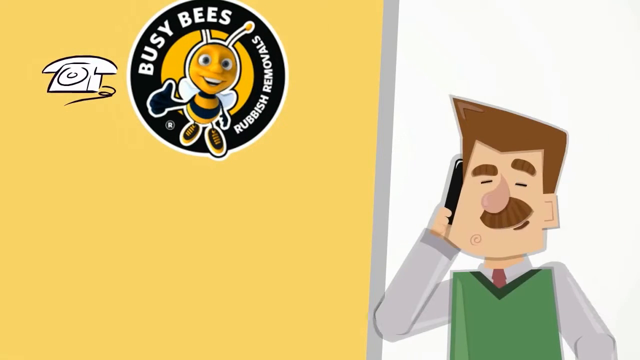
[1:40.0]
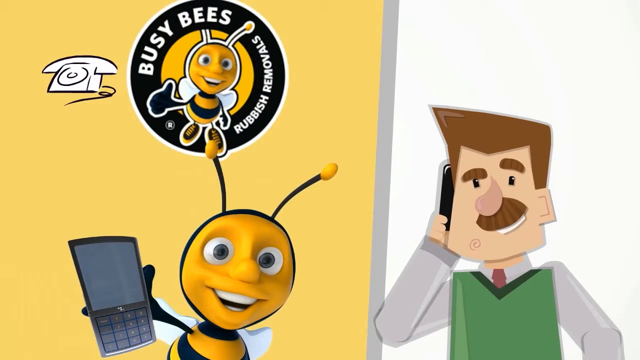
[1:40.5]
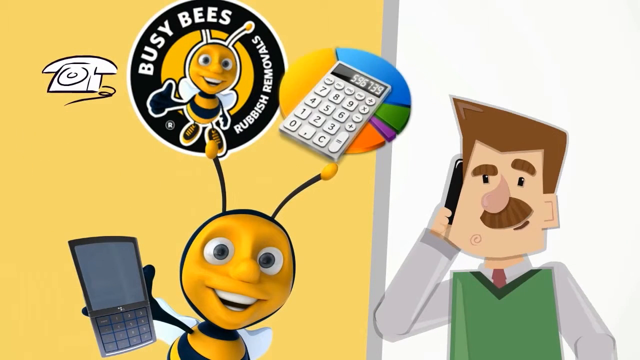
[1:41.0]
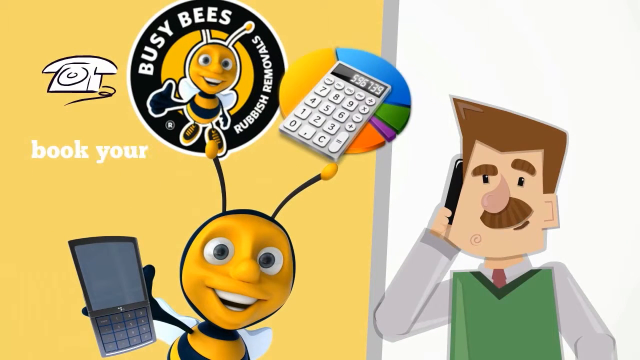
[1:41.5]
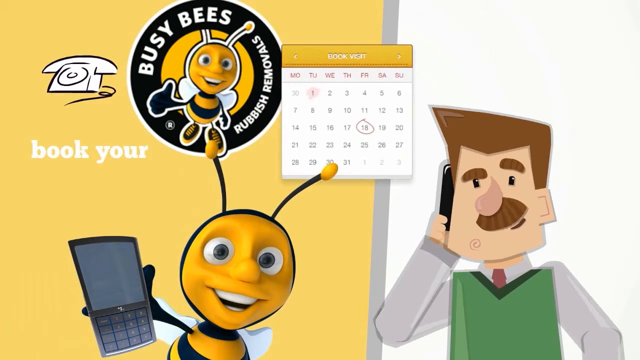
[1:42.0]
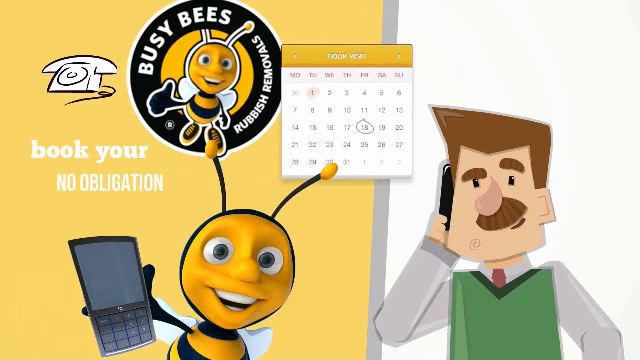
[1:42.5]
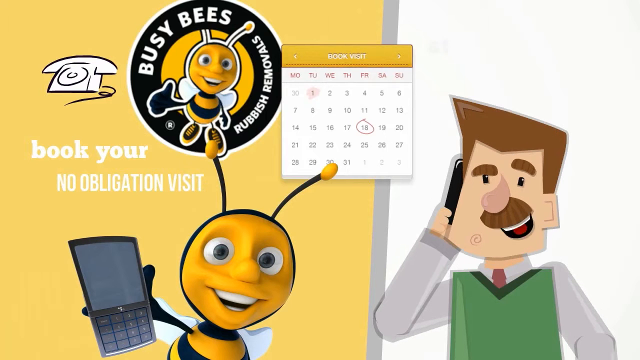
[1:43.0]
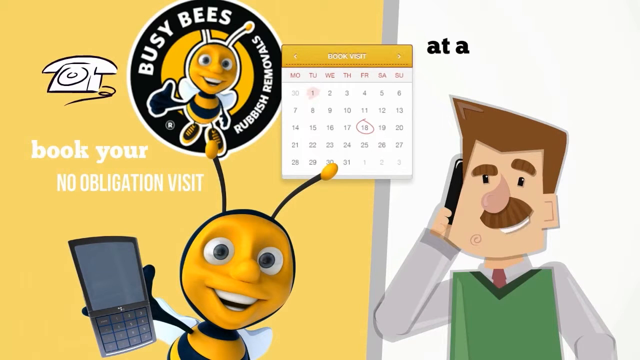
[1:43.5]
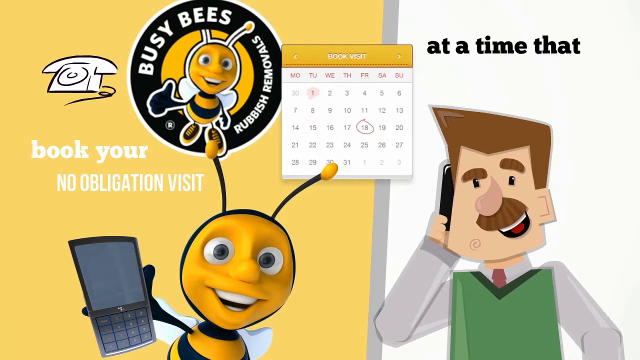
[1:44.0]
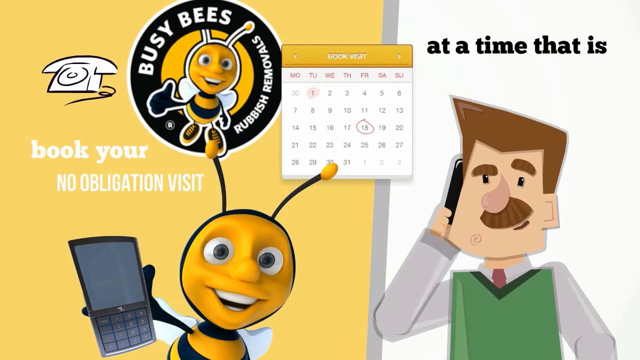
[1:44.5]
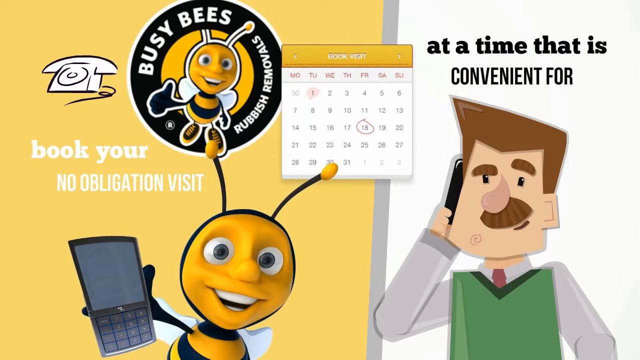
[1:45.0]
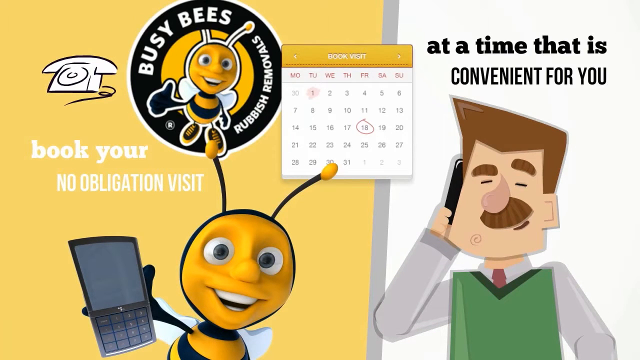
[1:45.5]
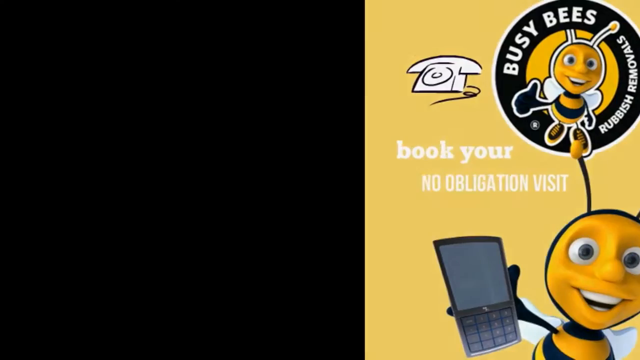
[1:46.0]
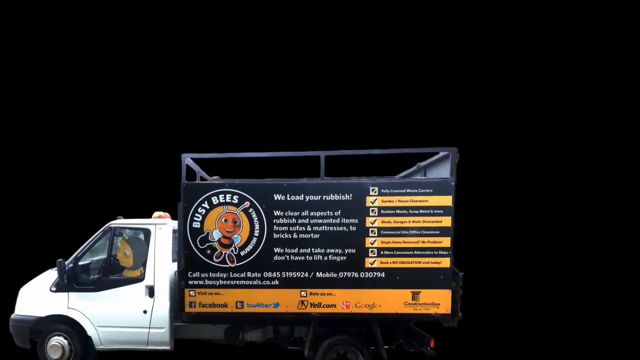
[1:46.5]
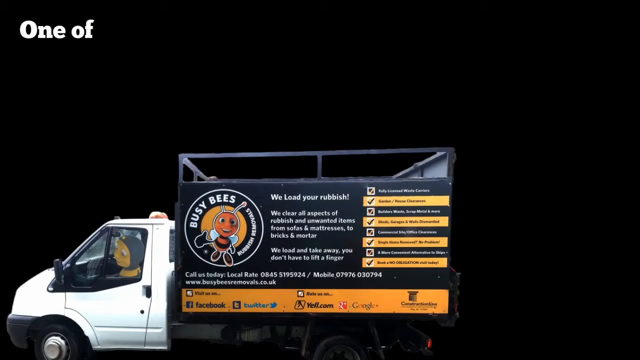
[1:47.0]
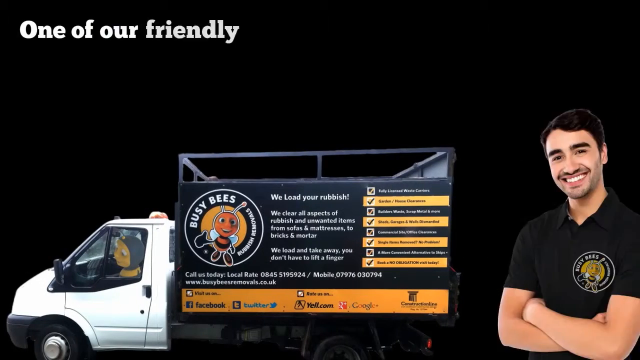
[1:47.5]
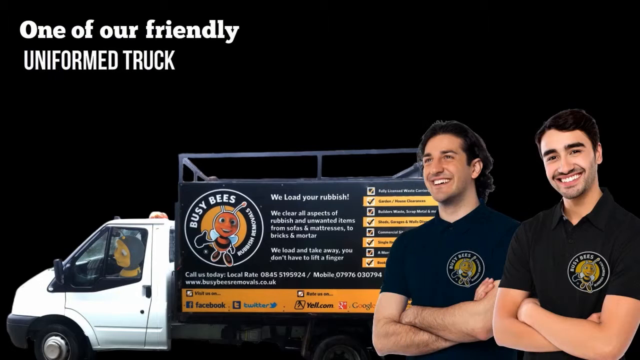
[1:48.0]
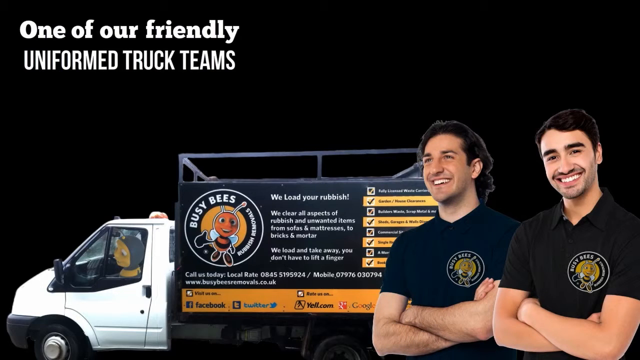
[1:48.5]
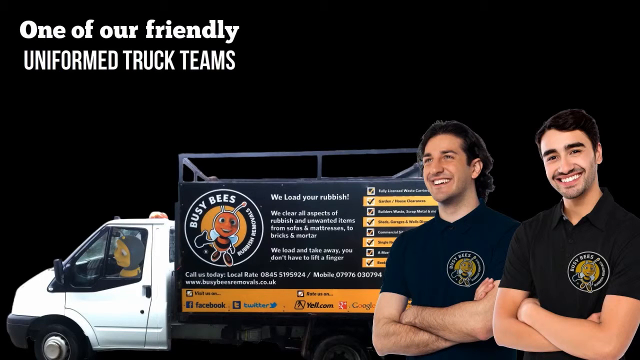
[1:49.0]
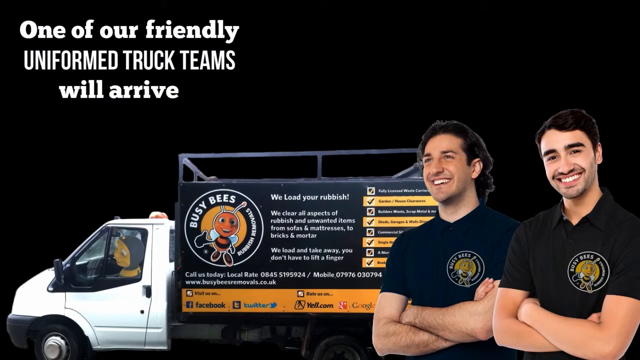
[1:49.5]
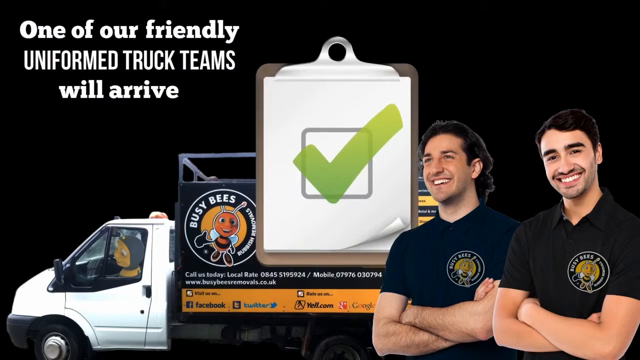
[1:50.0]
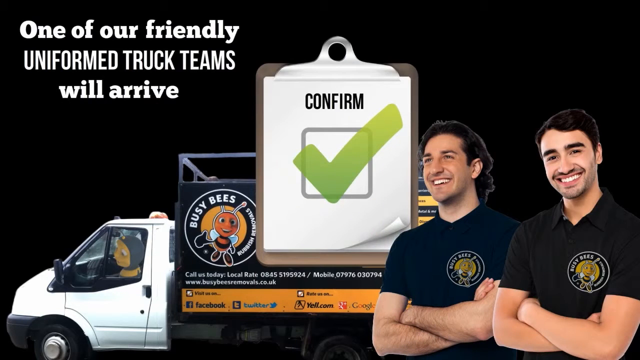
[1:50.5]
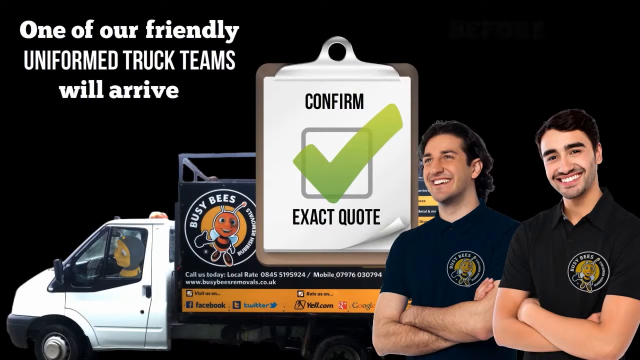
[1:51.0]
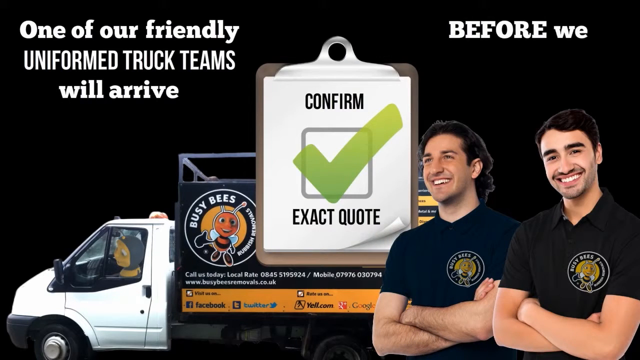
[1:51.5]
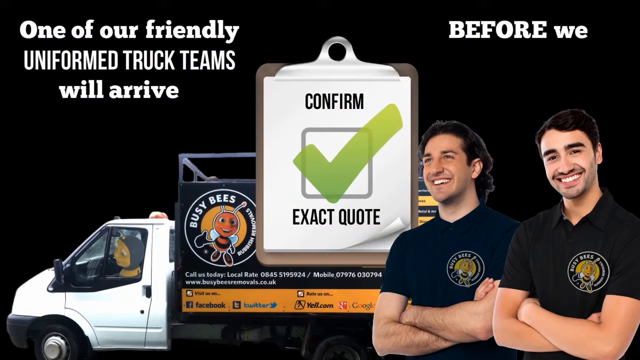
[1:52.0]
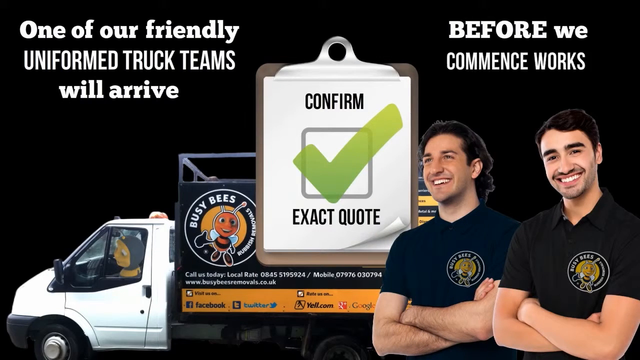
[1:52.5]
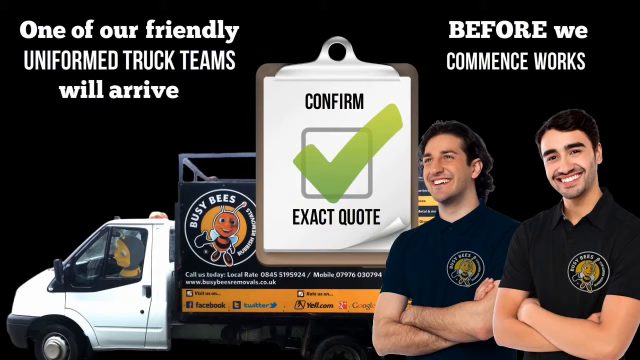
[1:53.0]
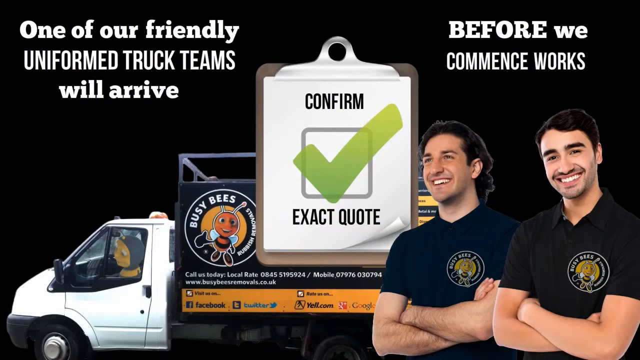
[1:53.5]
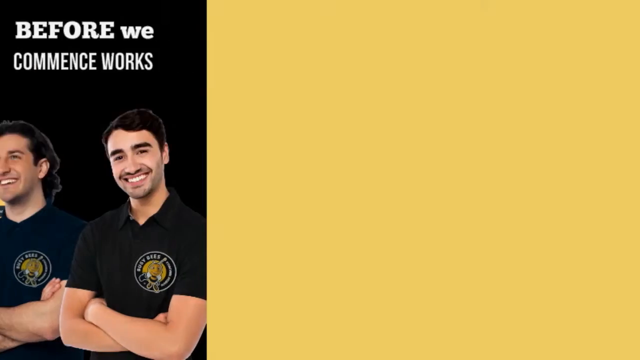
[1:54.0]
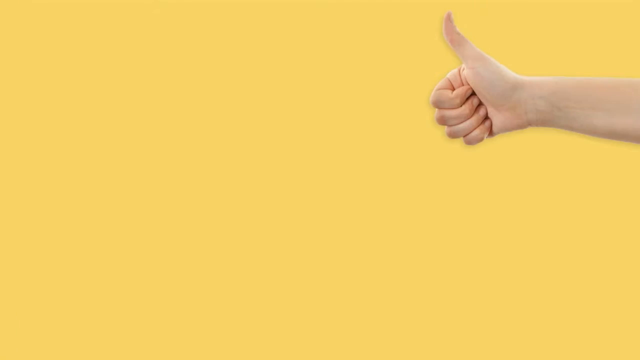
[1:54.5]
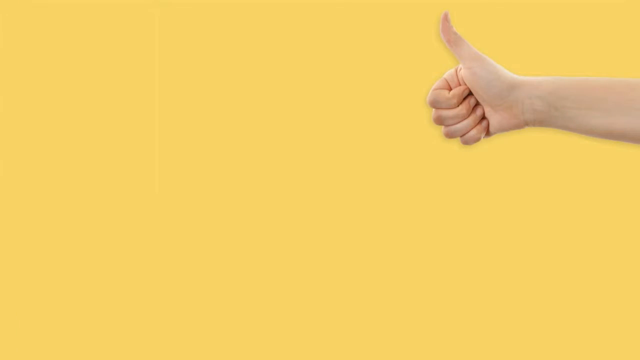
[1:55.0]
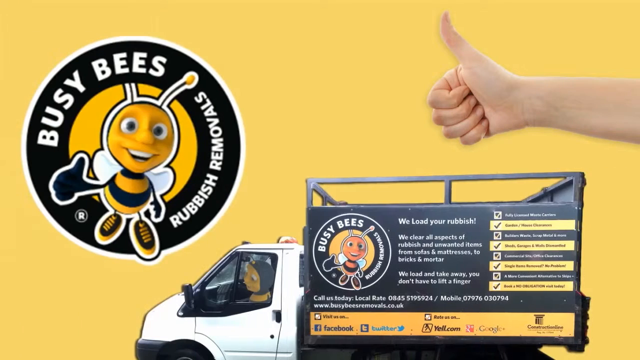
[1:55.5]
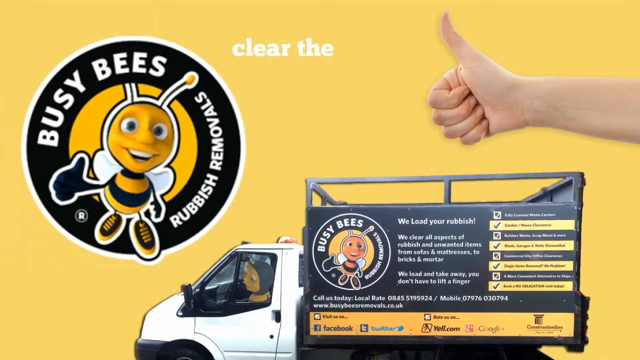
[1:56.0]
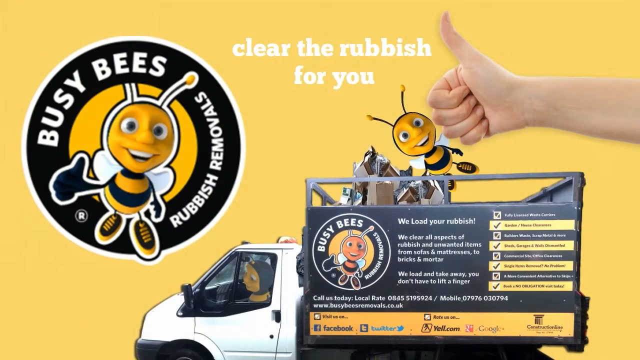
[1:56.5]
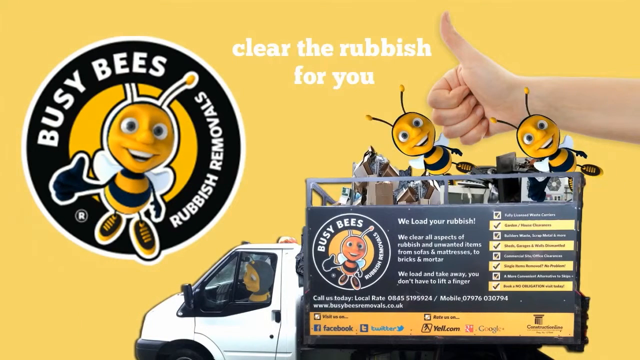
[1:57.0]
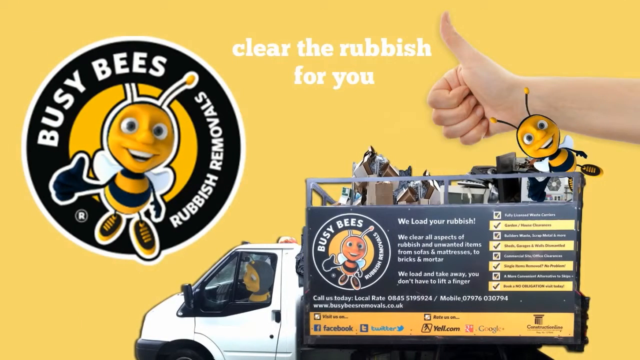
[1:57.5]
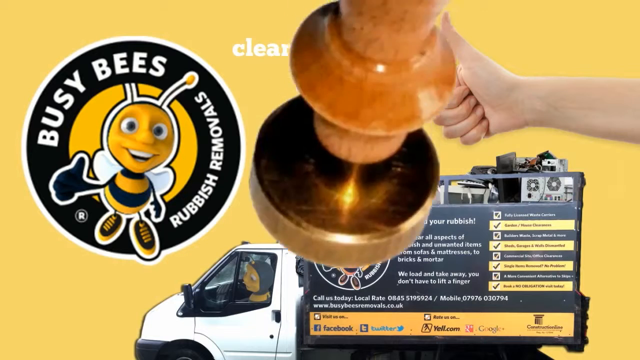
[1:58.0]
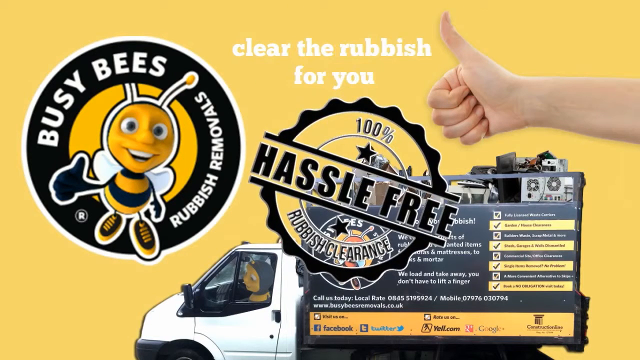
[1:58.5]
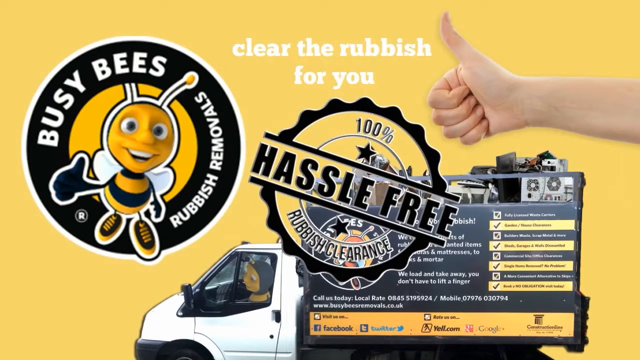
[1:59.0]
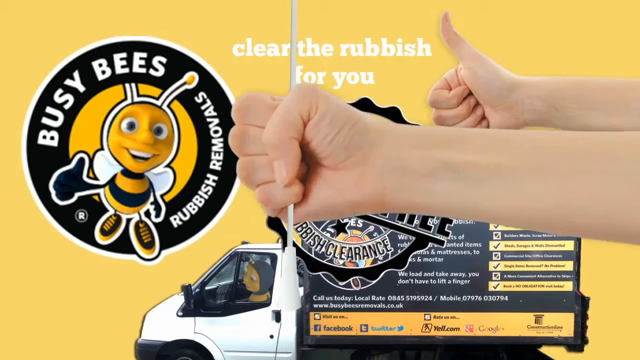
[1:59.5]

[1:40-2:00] The cartoon man talks on a cell phone in the bottom right area, and a cartoon bee appears on the left, also holding a cell phone. Captions beginning "Book your" appear on the left. A calendar appears at the top middle with the 18th circled, and text in the upper right area reads "At a time that is convenient for you." The Busy Bees work truck then appears in the center, facing left and shown from the side. Next come what look like Busy Bees staff members: two men side by side on the right side of the screen, both with arms crossed and smiling. The man on the right looks at the viewer, while the man on the left looks into the distance toward the upper left. Captions in the upper left read "One of our friendly uniform truck teams will arrive." A cartoon clipboard appears in the middle with "confirm" at the top, "exact quote" at the bottom and a green checkmark in the middle. Text in the top right corner reads "before we commence works." In the next scene, the Busy Bees logo is on the left, the work truck is at the bottom right, and a thumbs up is in the upper right. Text in the upper center reads "clear the rubbish for you," and a stamp comes down from the top center to the middle, reading "100% rubbish clearance hassle-free."